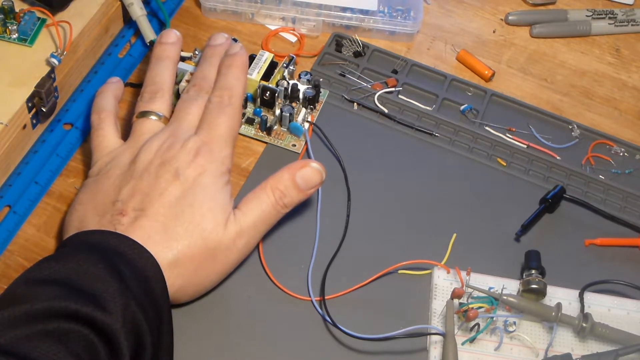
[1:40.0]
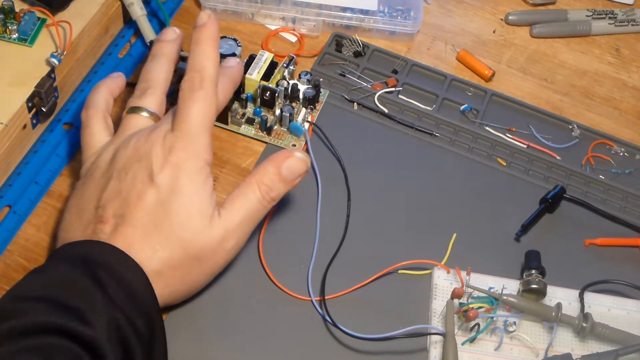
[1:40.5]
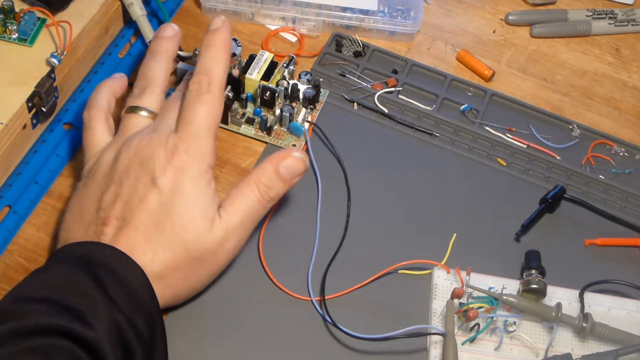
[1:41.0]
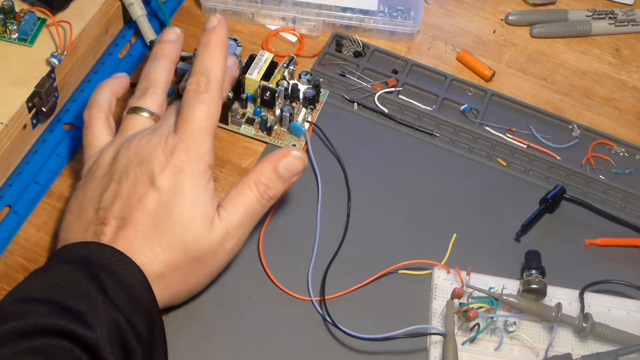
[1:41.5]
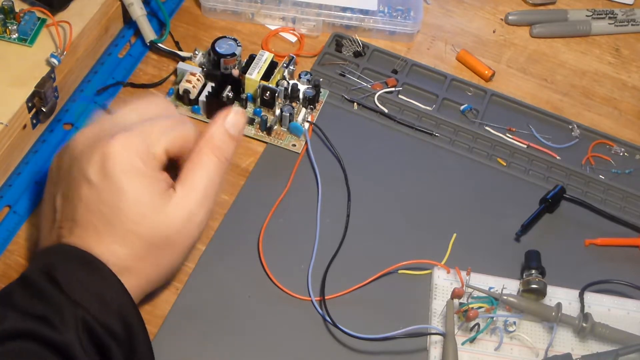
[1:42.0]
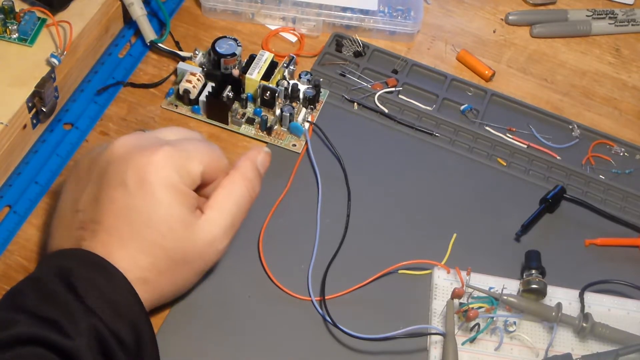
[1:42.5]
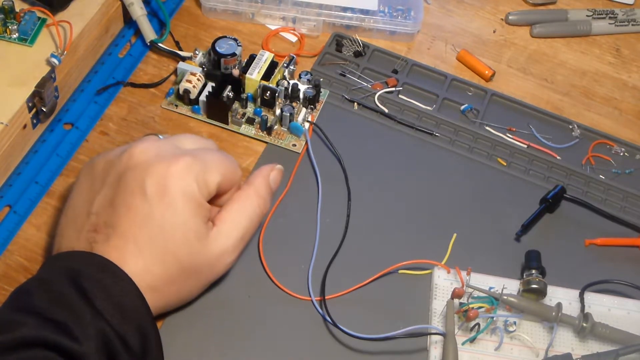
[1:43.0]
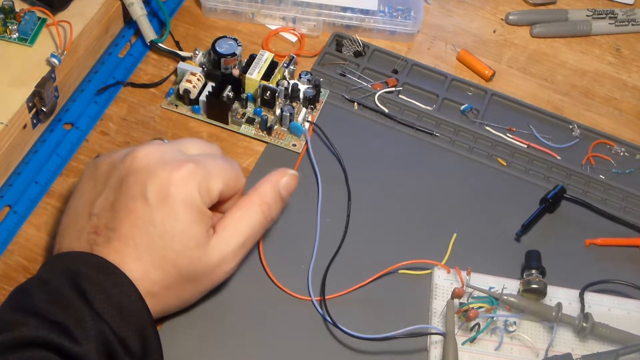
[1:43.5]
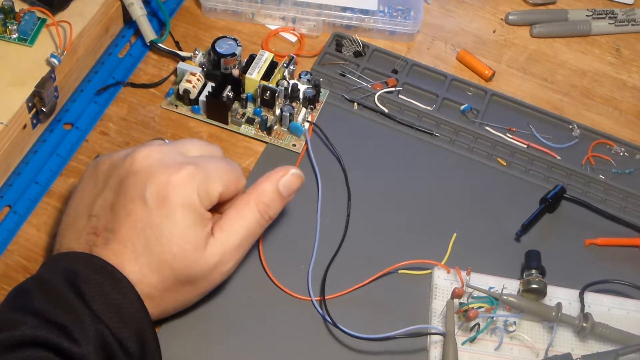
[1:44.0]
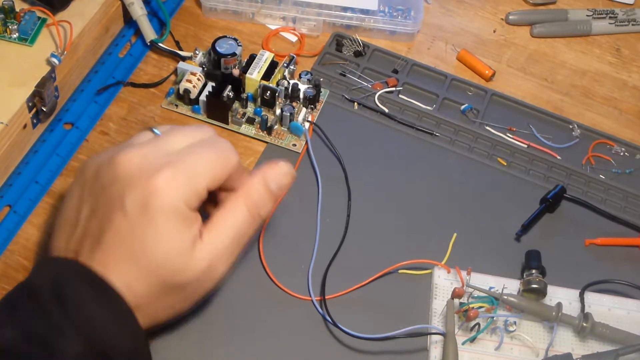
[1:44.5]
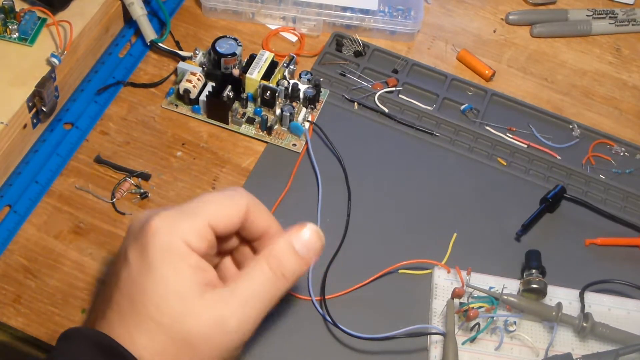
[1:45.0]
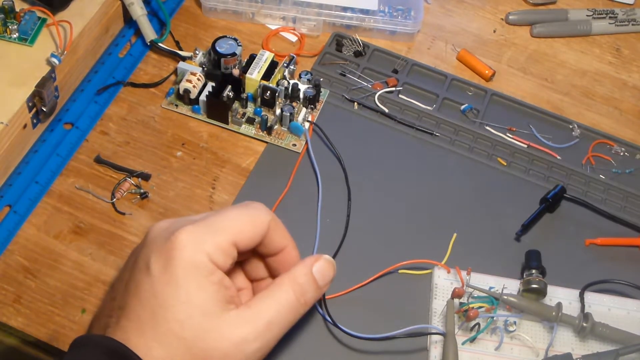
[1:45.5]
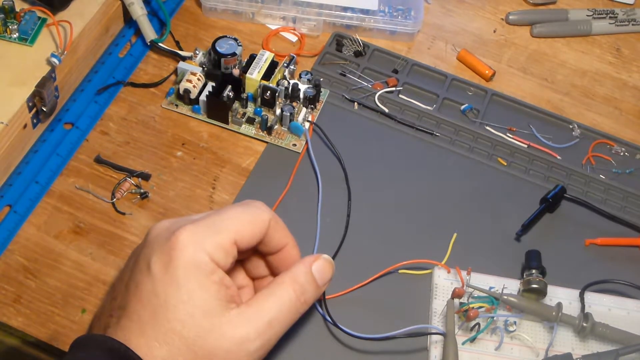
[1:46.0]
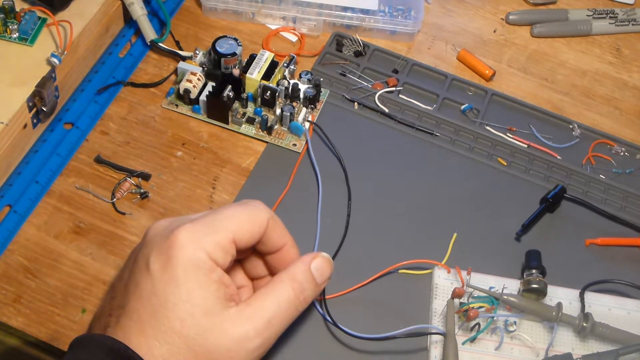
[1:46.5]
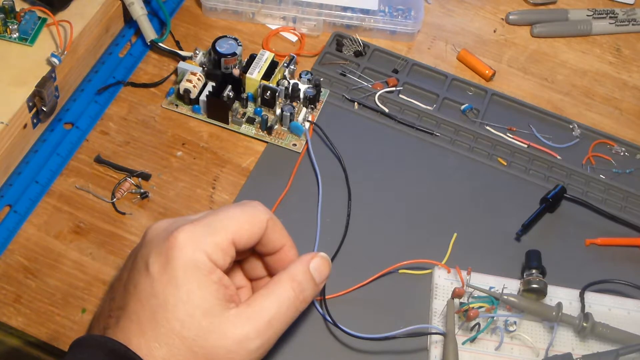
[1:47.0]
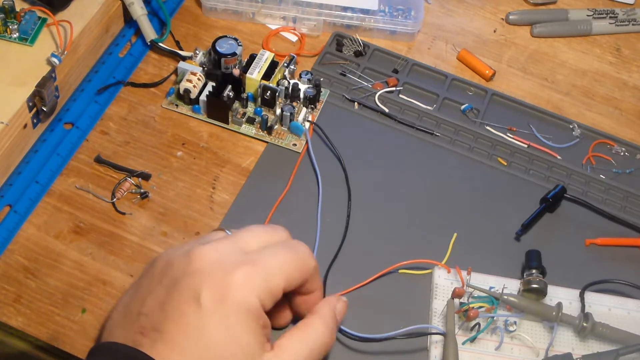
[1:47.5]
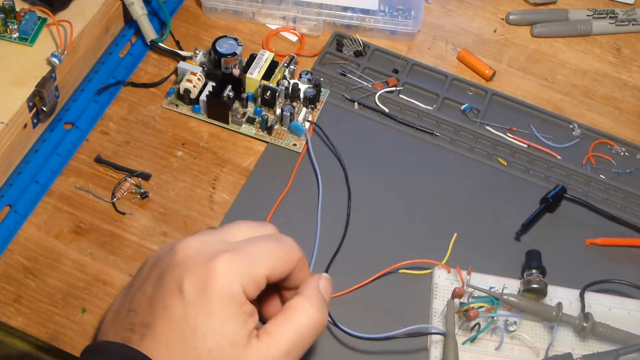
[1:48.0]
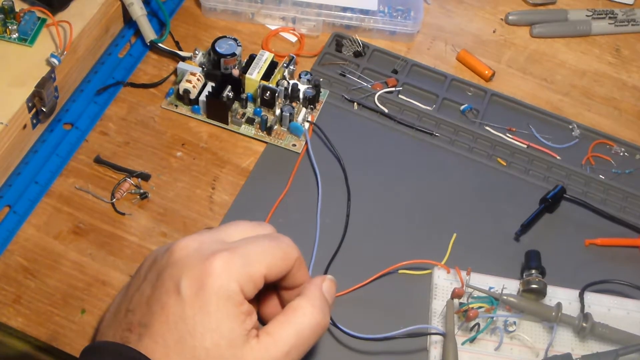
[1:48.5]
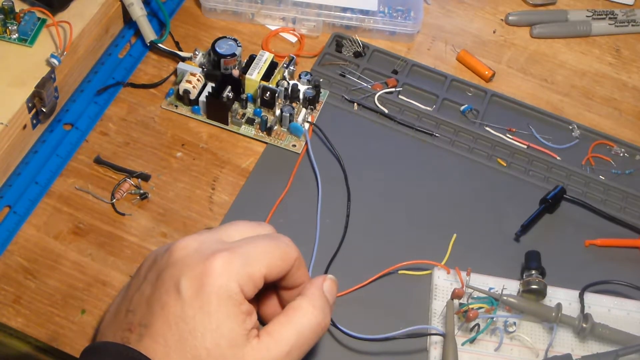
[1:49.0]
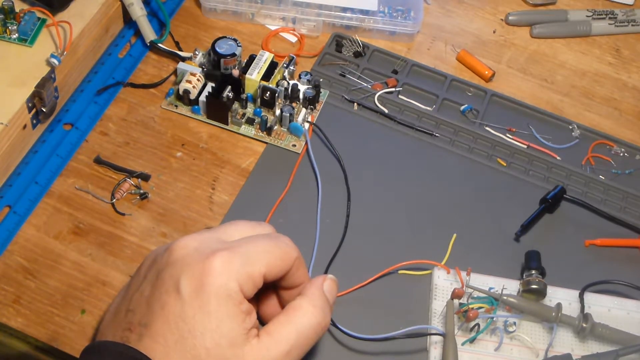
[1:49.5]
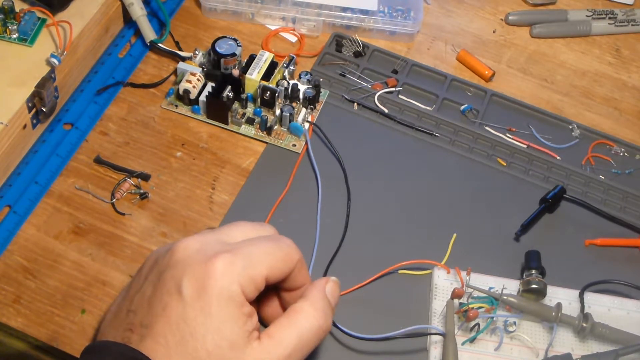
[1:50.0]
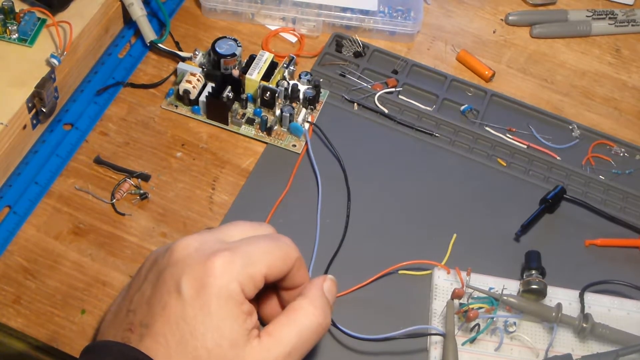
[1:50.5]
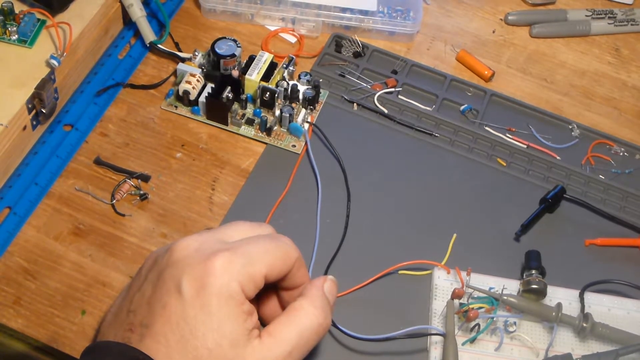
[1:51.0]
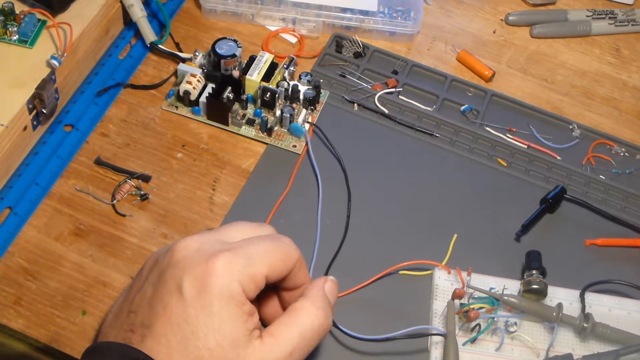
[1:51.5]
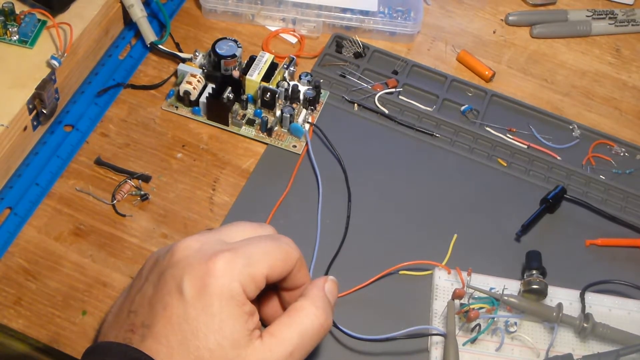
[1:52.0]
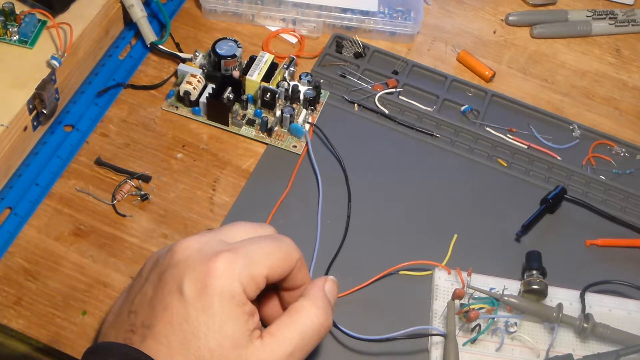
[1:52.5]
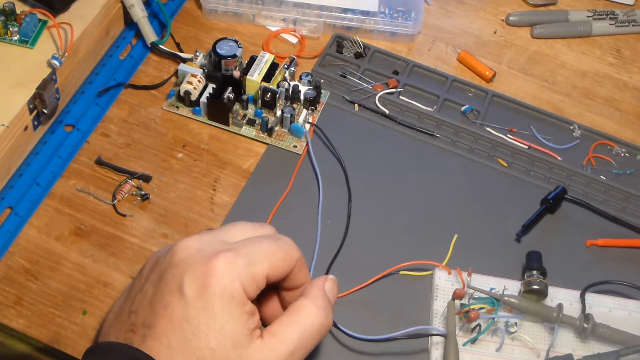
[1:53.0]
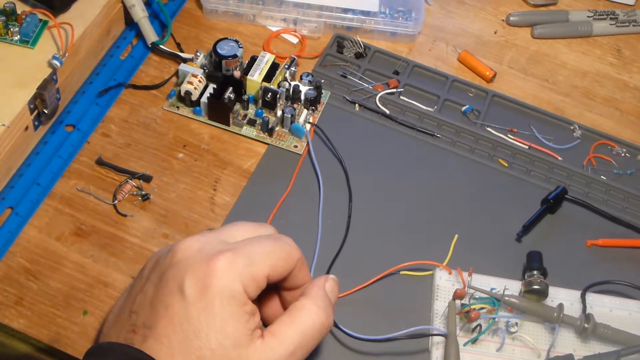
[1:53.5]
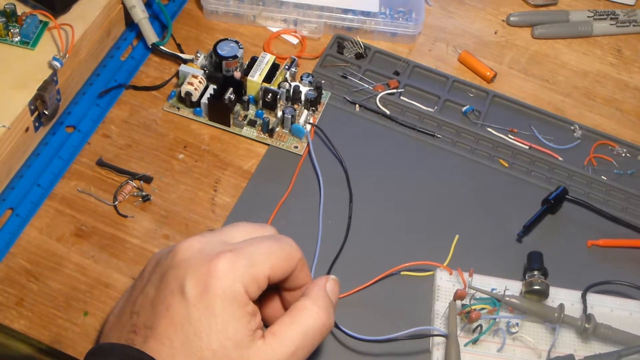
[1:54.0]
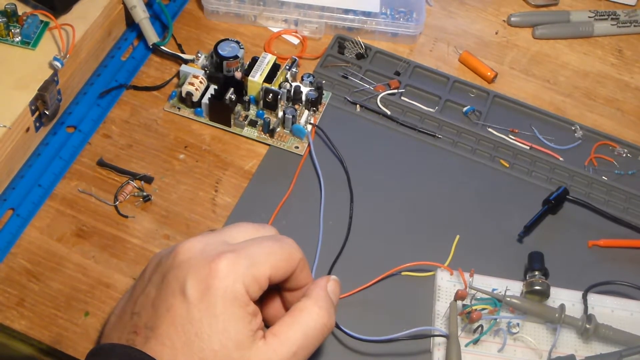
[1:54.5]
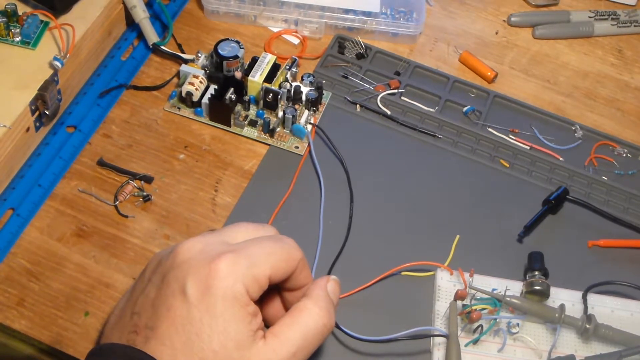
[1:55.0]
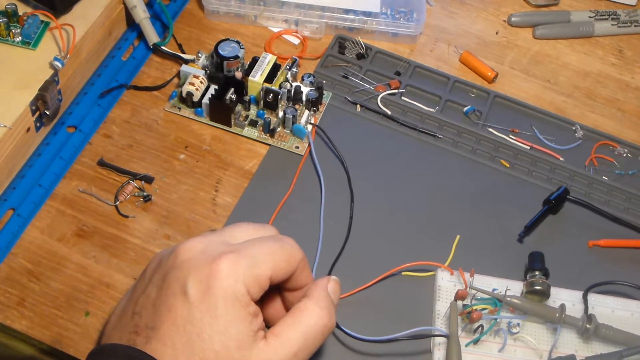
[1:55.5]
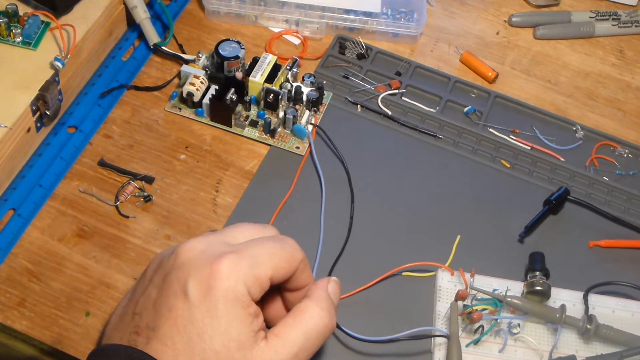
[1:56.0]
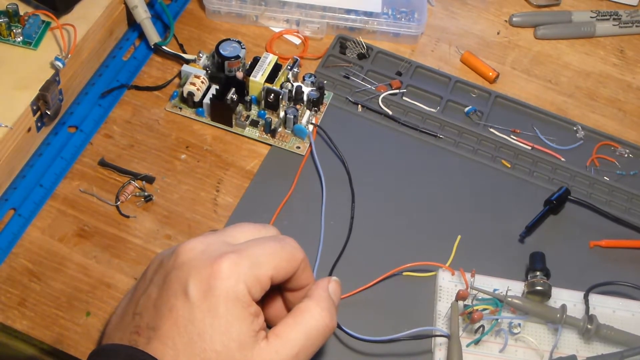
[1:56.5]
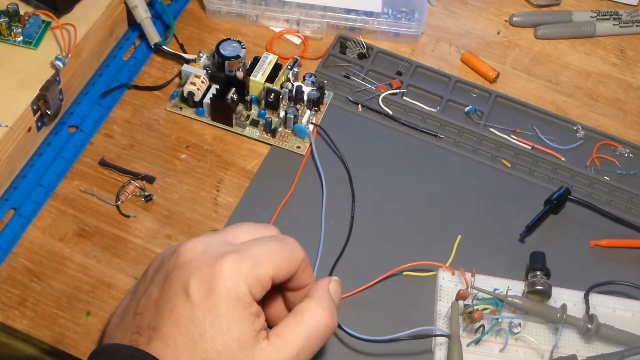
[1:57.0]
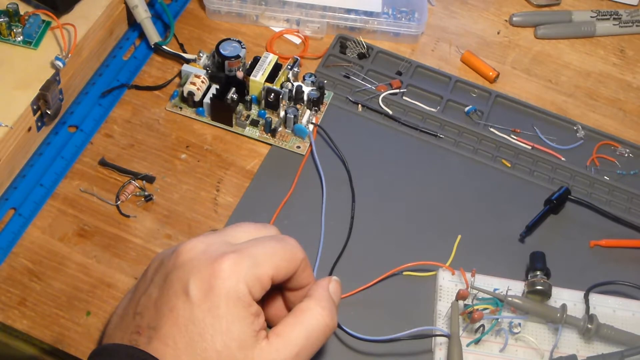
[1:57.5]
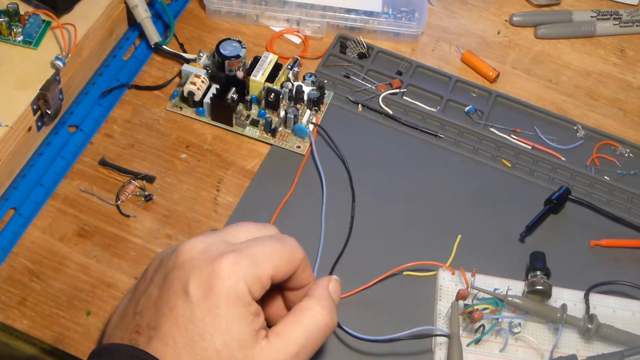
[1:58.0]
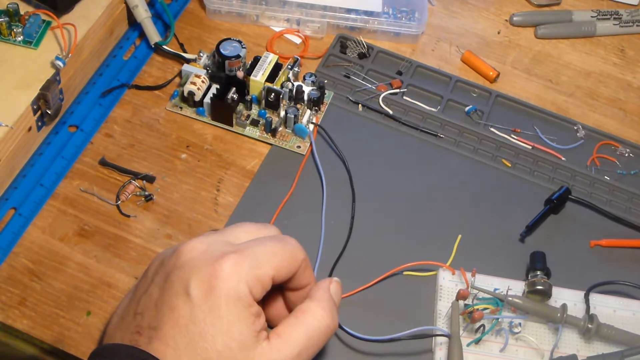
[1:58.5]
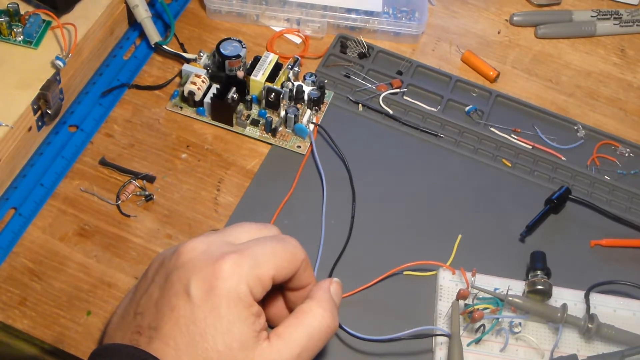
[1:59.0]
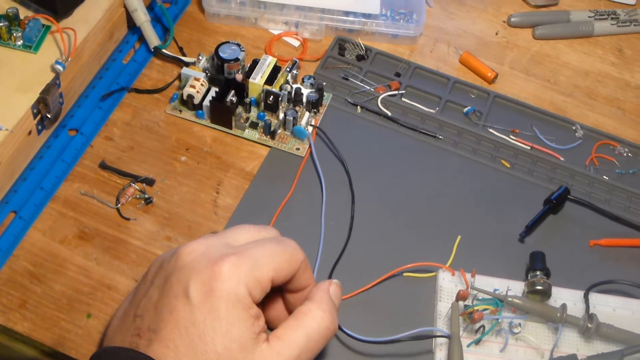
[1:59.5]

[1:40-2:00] The presenter points at the main board at the top left. A number of wires and what look like orange capacitors are on the desk. There is a ruler on the left side and maybe a small toolbox, and at the top is a plastic box holding many small components. At the top right of the screen are two Sharpies, which he does not use. The desk is covered by a mat, probably an electronic testing mat, with the white board tester on top of it at the bottom right. The view then goes back to the oscilloscope.